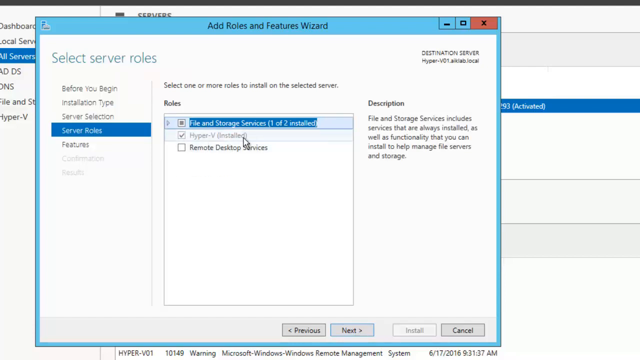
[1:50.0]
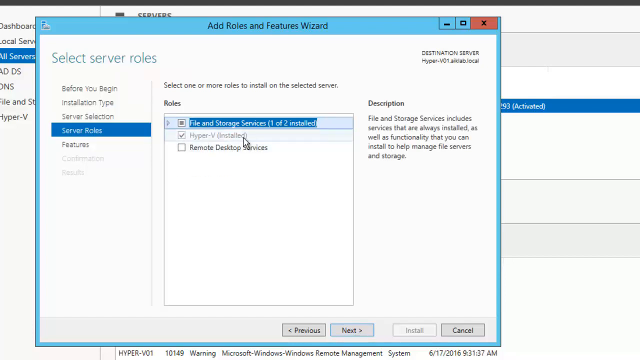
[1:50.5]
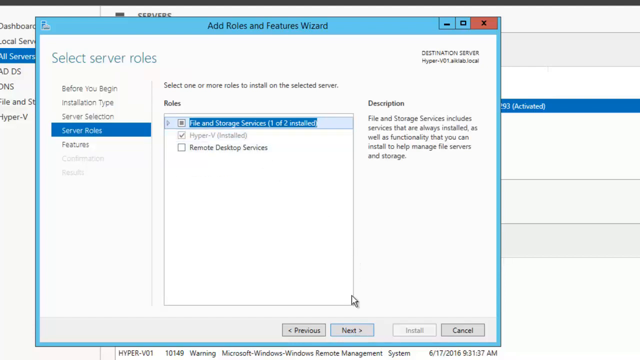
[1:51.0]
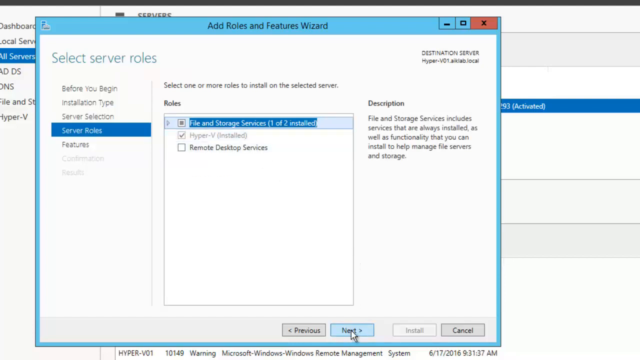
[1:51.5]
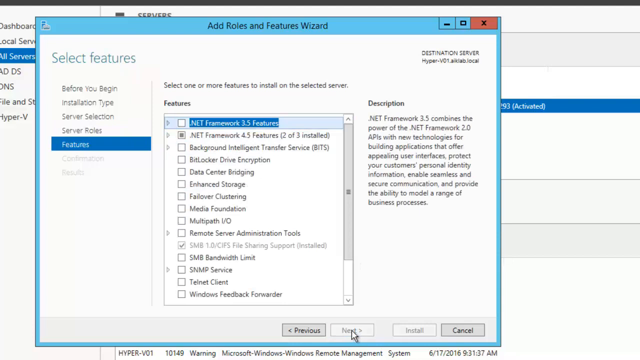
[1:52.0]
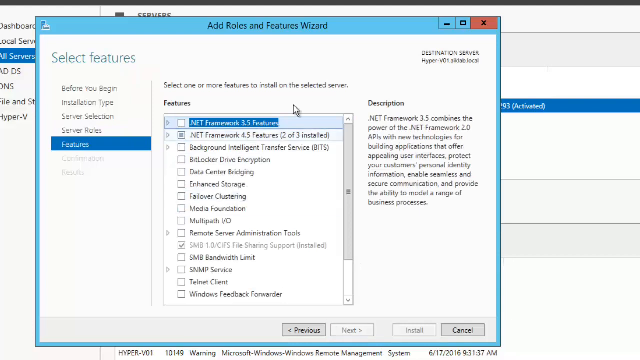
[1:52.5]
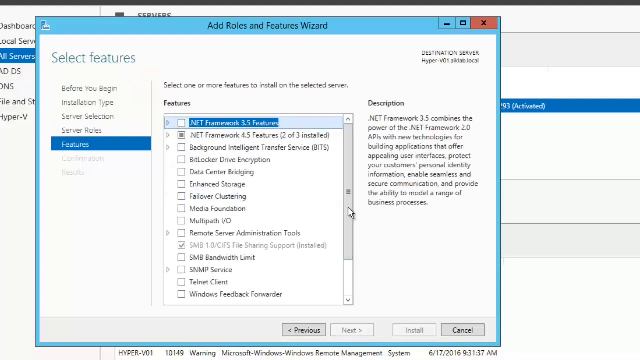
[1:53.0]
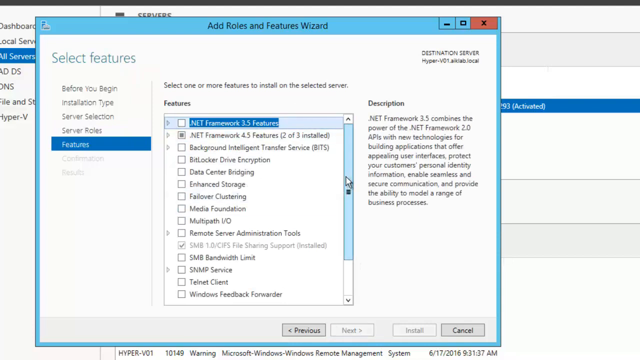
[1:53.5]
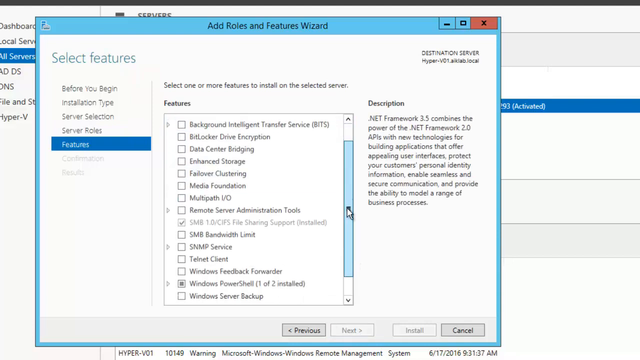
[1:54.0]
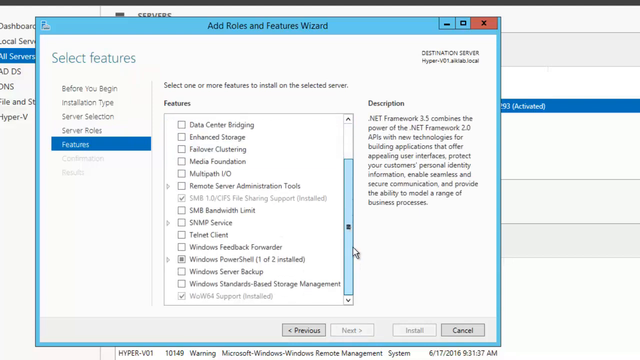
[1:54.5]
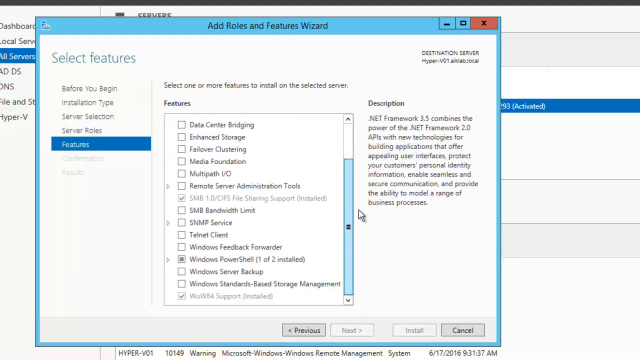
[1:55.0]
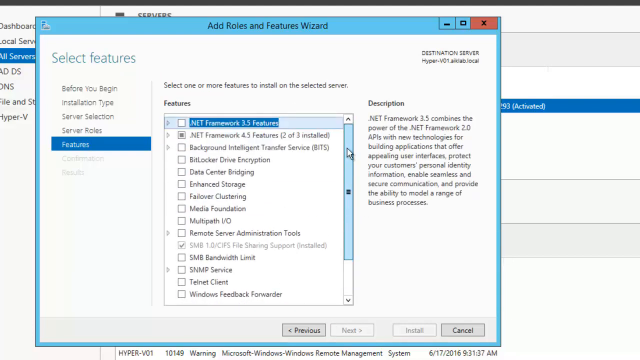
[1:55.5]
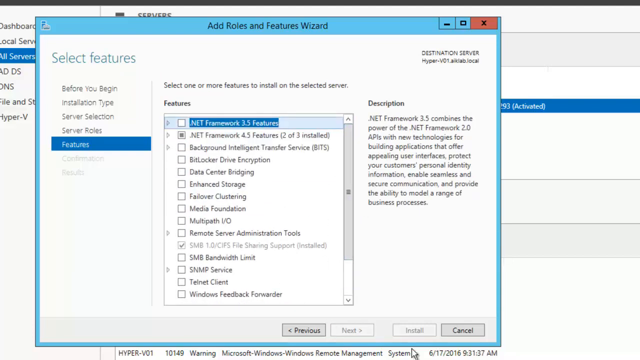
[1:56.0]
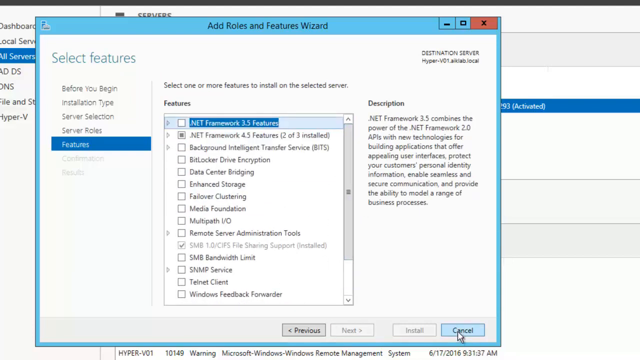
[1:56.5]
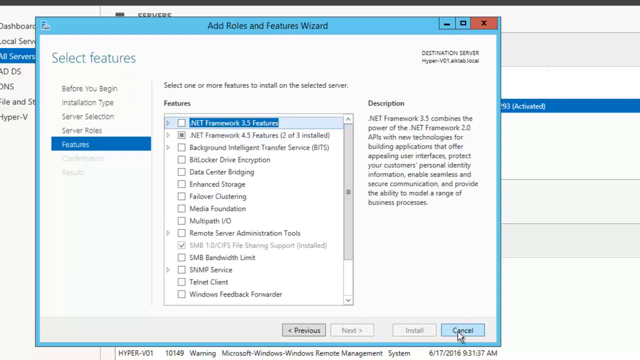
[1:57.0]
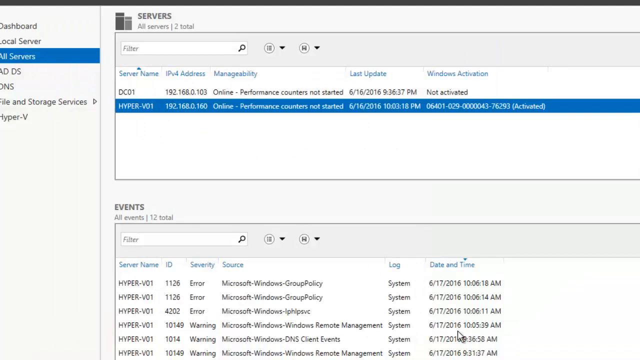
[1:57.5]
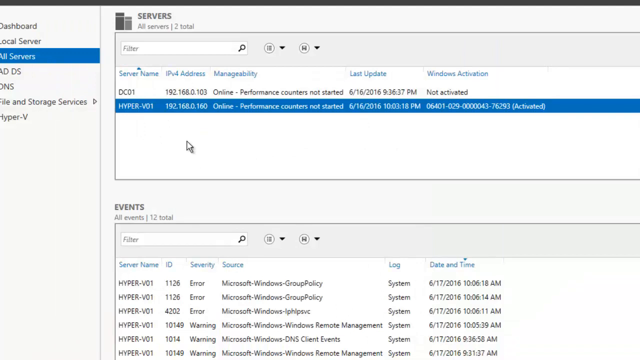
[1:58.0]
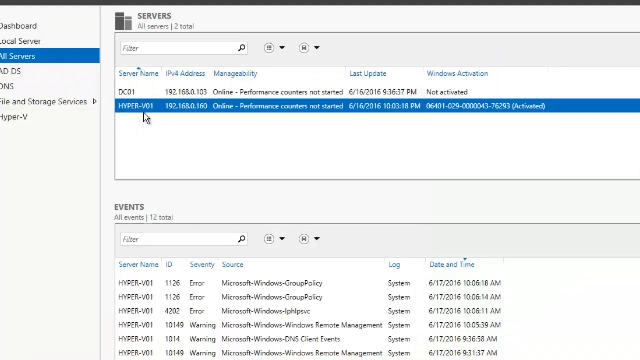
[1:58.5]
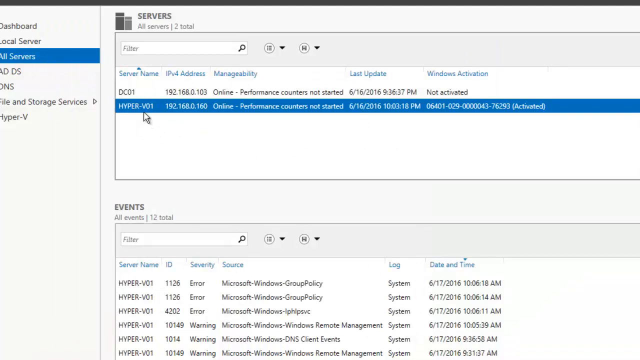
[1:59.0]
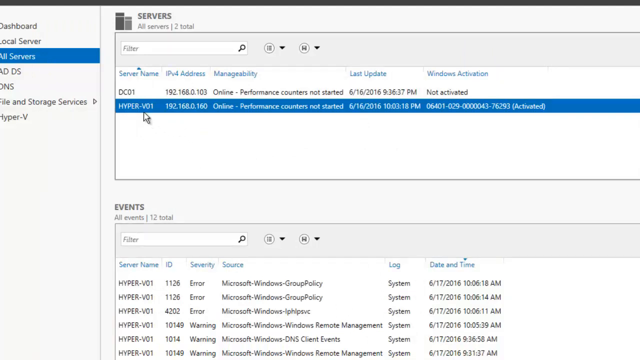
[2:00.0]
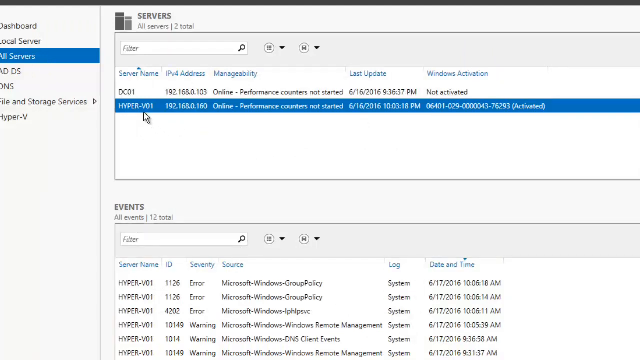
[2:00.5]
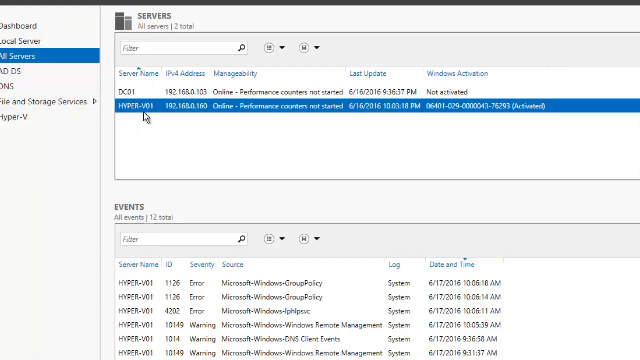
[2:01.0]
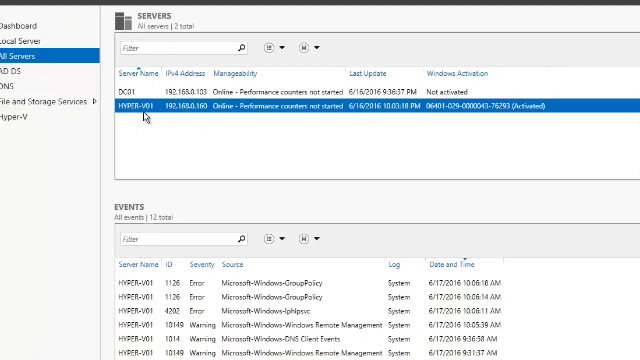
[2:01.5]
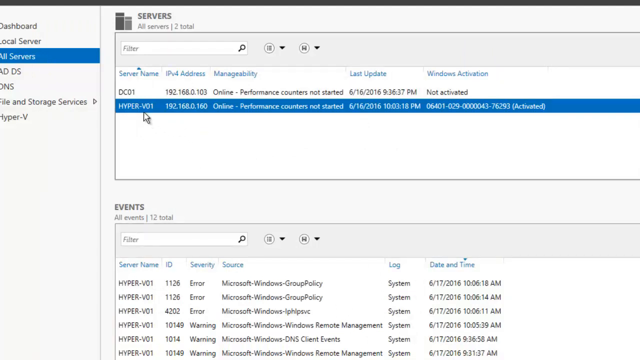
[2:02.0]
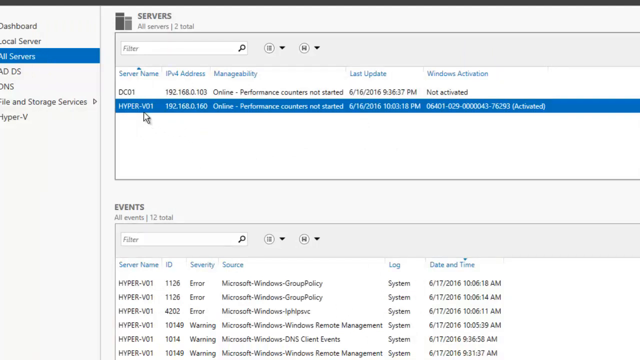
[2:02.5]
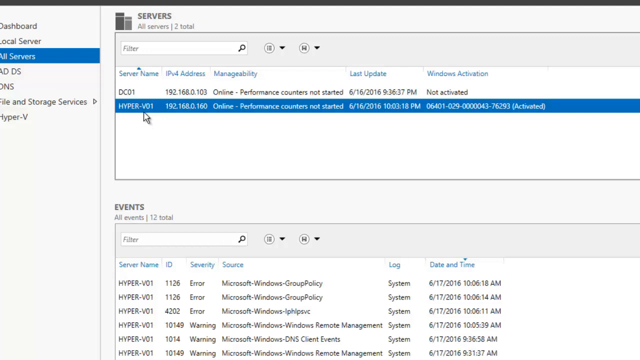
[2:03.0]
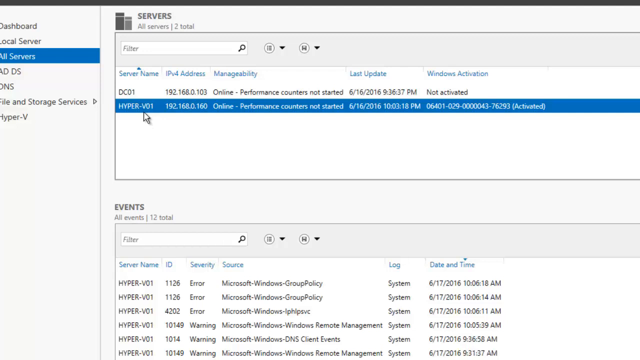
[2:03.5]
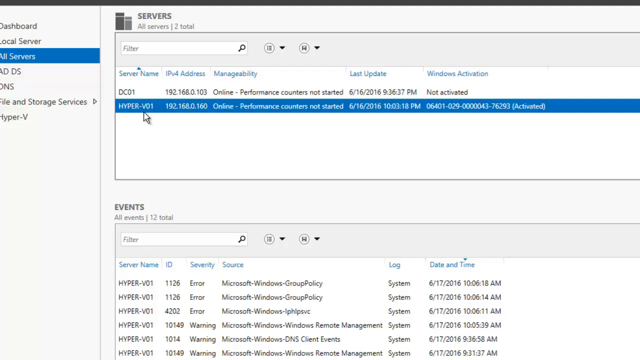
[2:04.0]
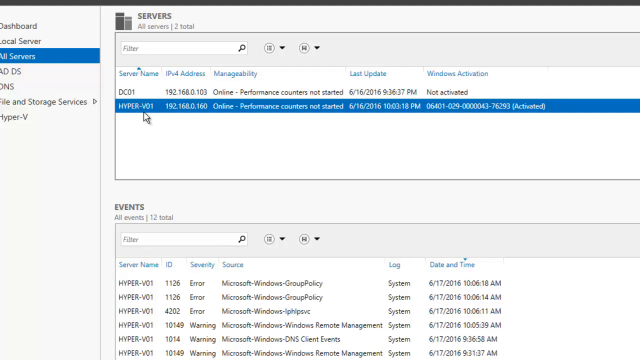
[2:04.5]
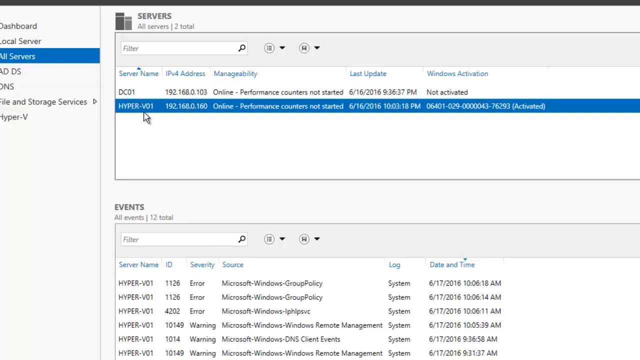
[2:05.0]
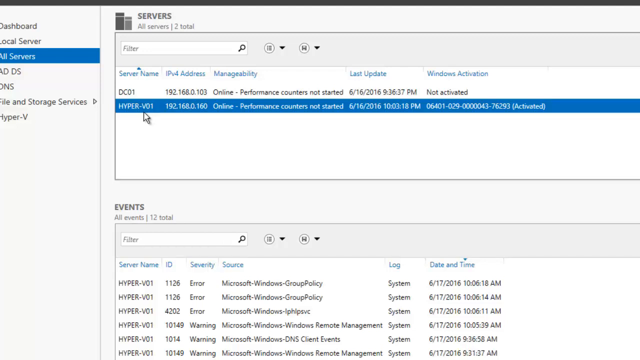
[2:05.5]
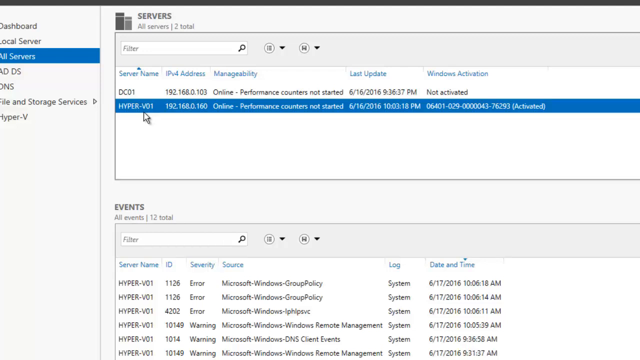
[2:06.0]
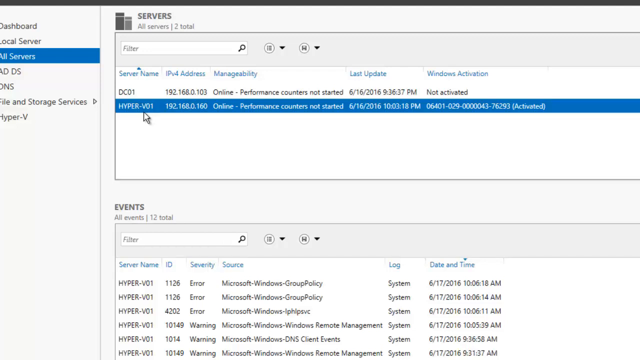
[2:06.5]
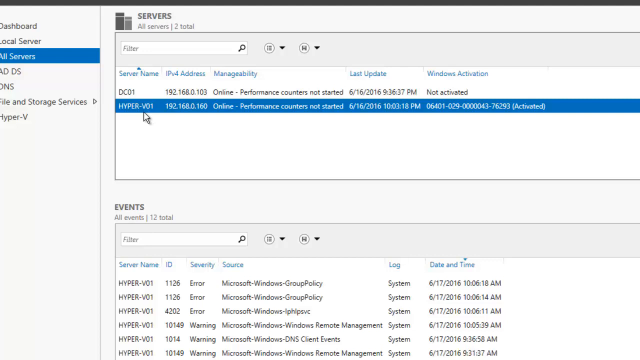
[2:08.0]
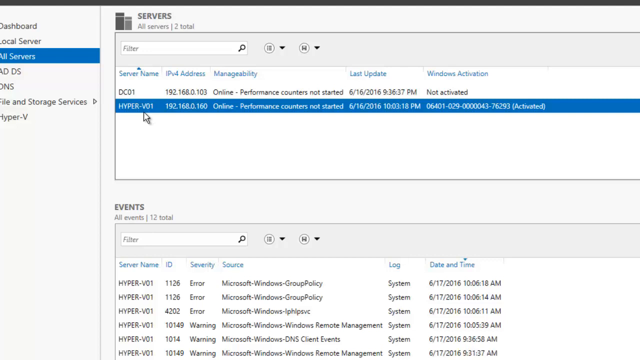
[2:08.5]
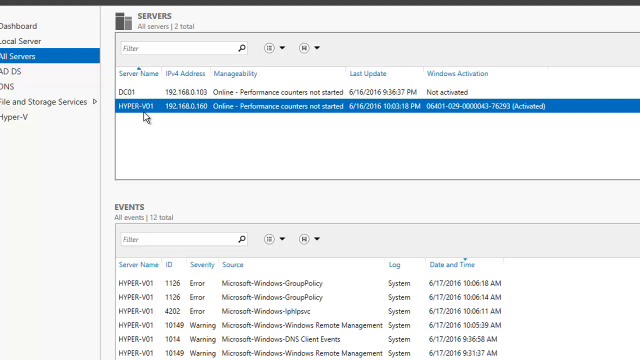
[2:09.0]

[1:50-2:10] The Add Roles and Features Wizard options box is open. On the left, under select server roles, server roles is highlighted in blue, and to the right the roles box is open. The user moves the mouse pointer around, selecting options and checking that they are selected, using the scroll bar to scroll up and down, and clicks next. They eventually click cancel in the options box. The view returns to the servers section of the main page, where Hyper V01 is highlighted in blue.